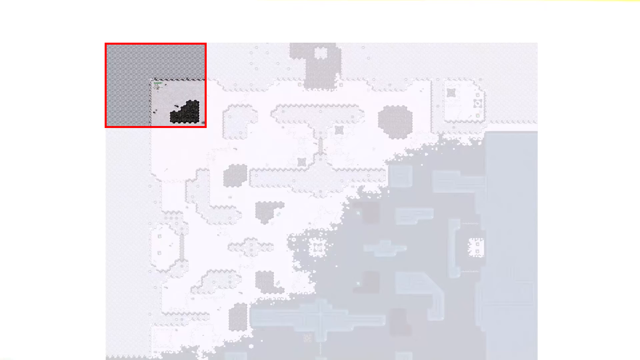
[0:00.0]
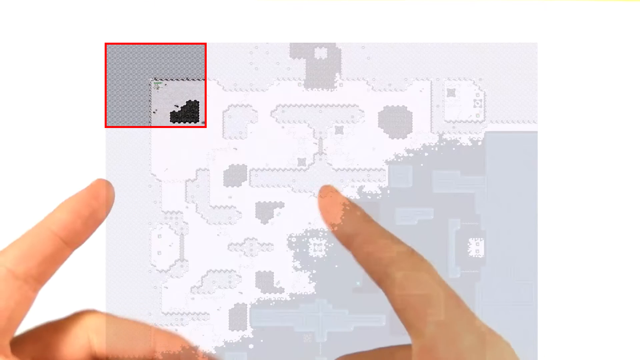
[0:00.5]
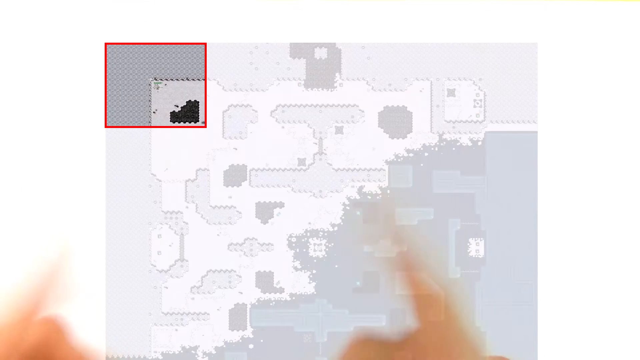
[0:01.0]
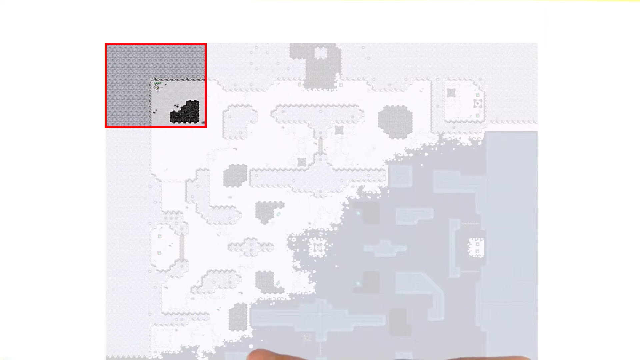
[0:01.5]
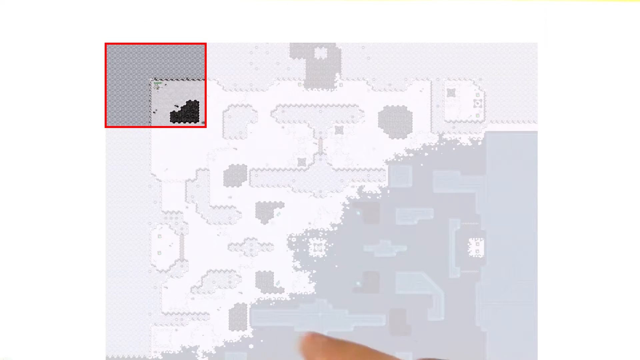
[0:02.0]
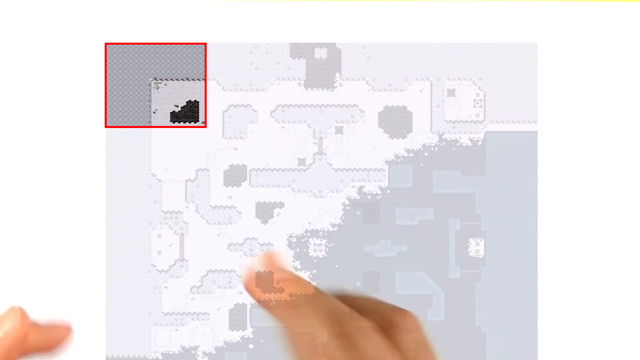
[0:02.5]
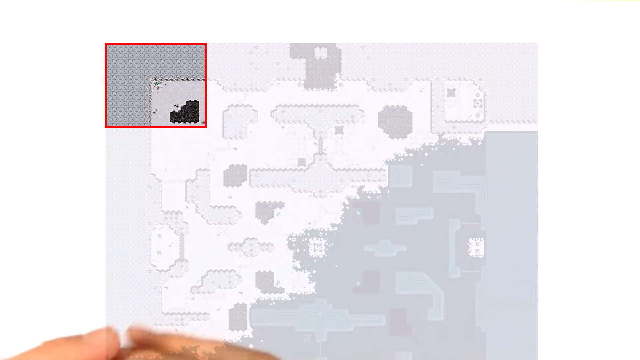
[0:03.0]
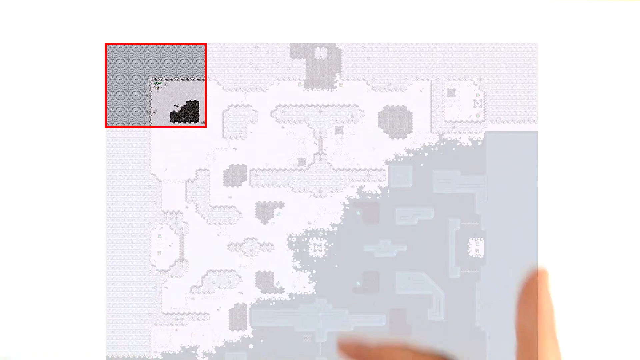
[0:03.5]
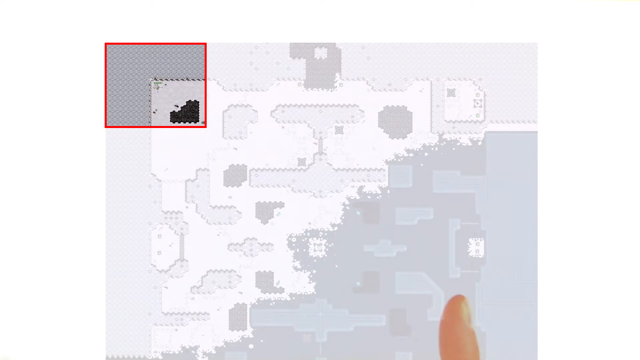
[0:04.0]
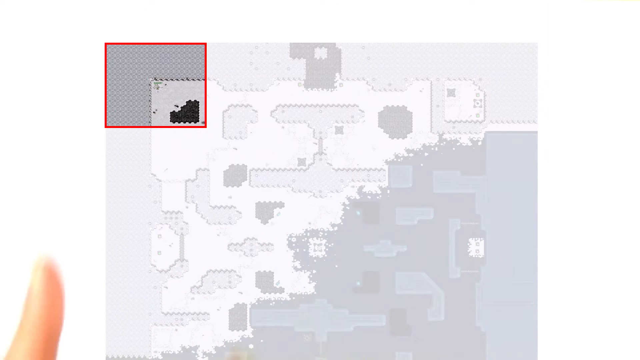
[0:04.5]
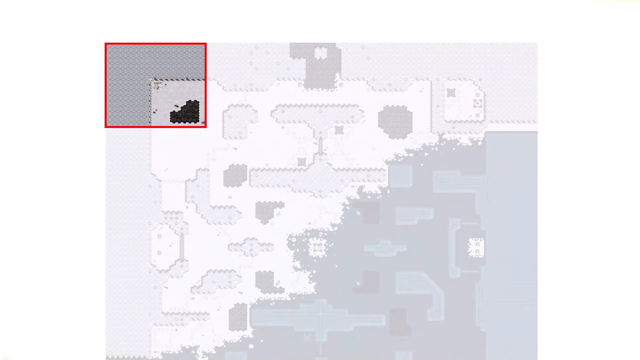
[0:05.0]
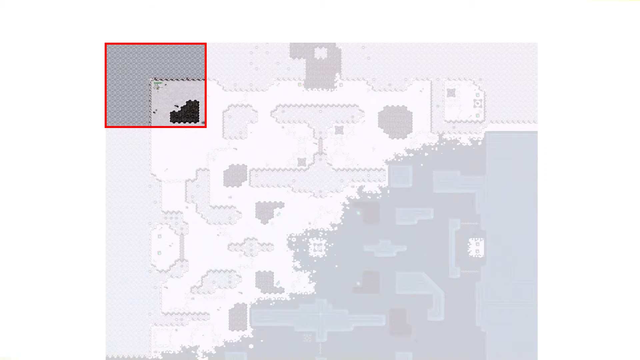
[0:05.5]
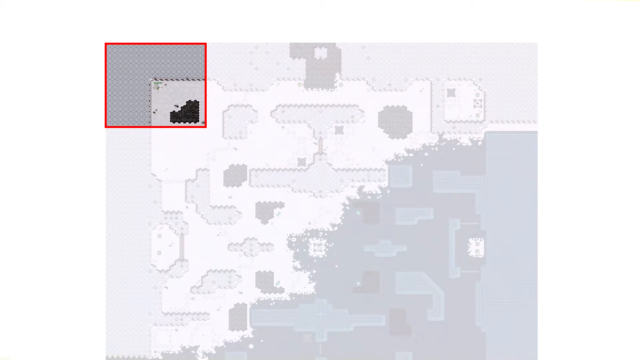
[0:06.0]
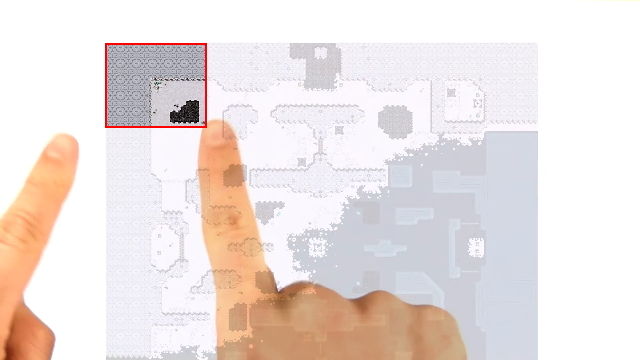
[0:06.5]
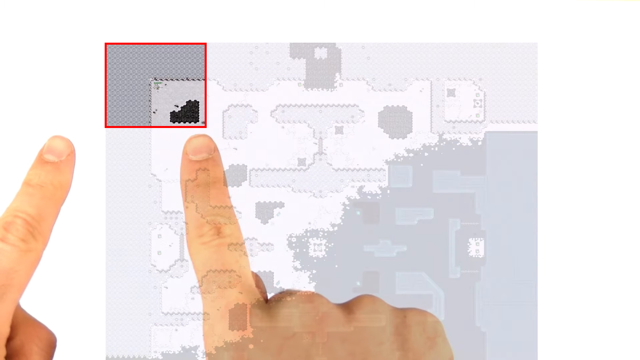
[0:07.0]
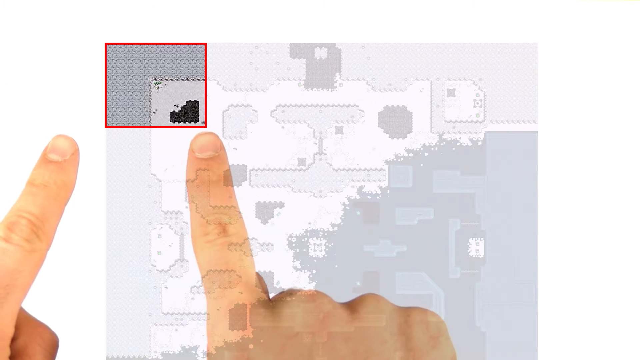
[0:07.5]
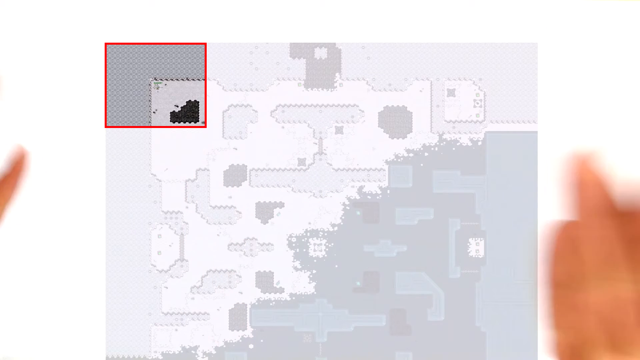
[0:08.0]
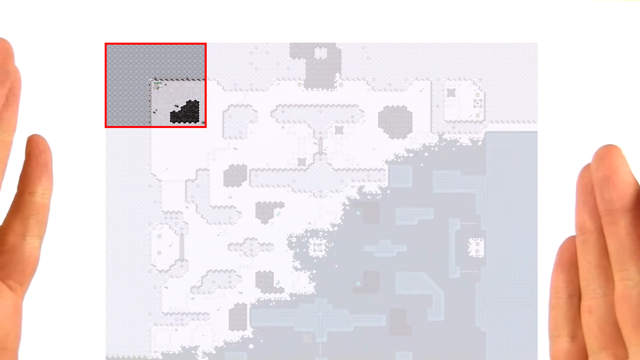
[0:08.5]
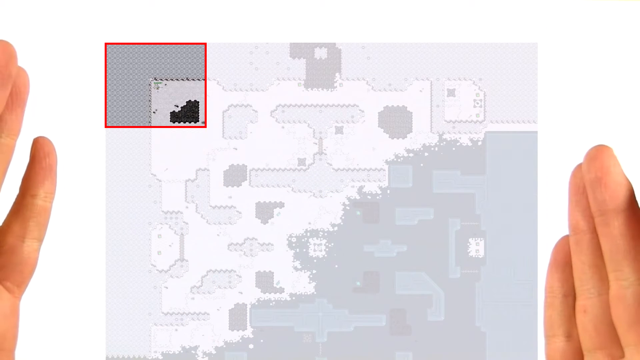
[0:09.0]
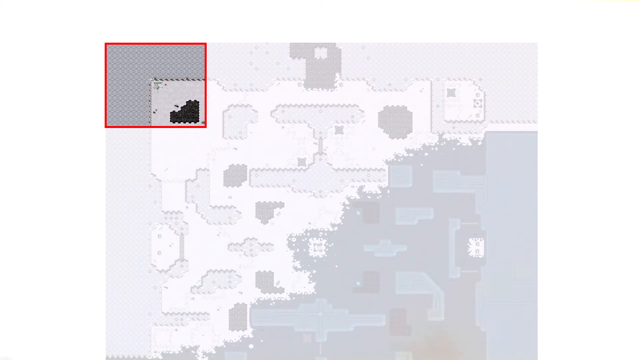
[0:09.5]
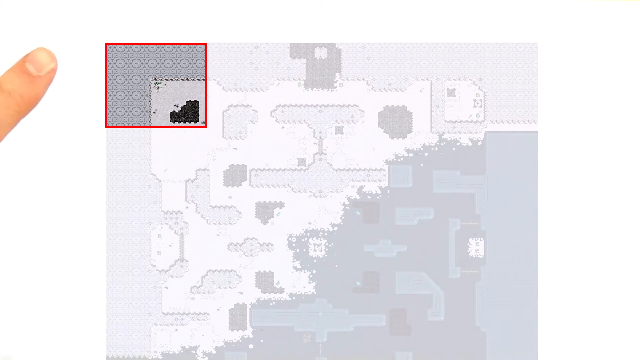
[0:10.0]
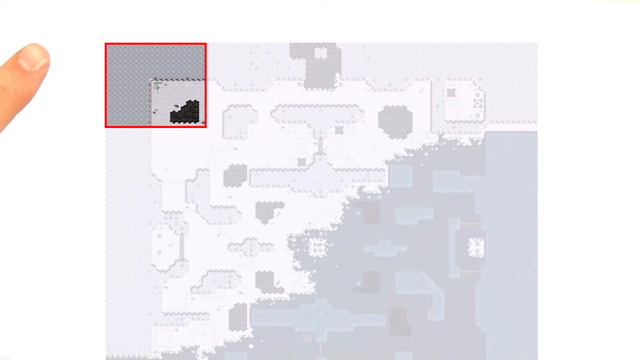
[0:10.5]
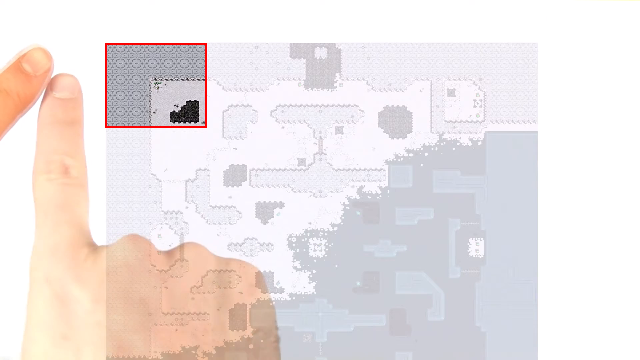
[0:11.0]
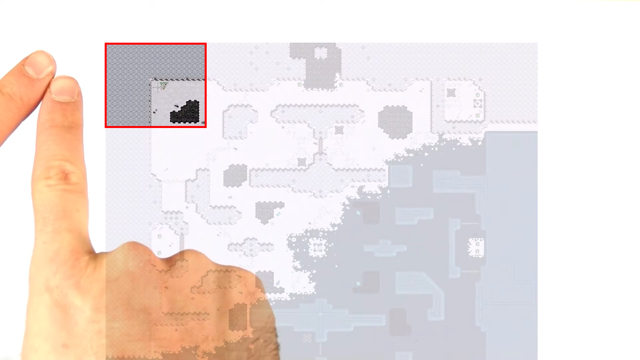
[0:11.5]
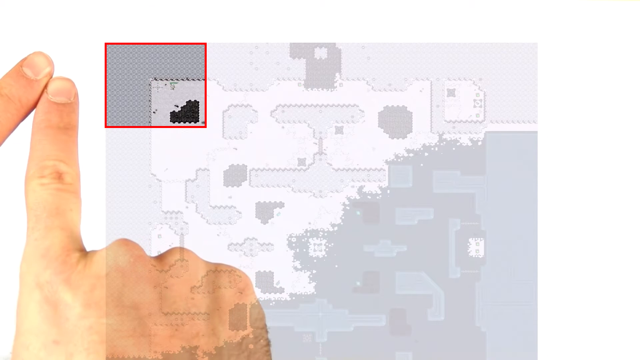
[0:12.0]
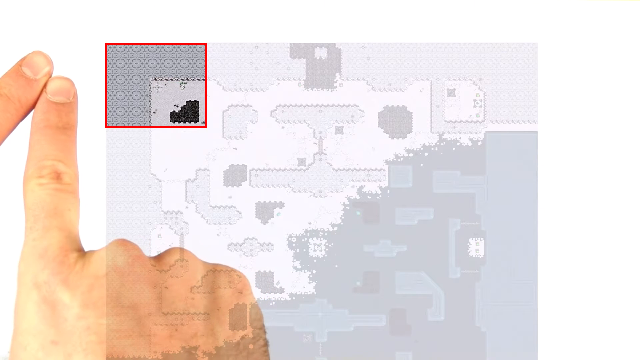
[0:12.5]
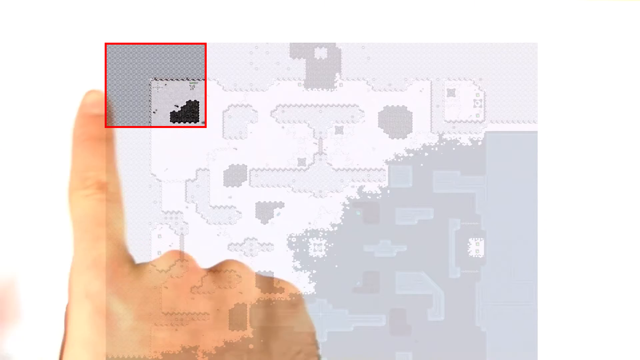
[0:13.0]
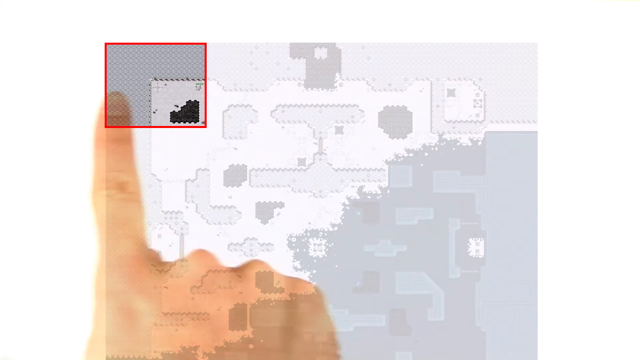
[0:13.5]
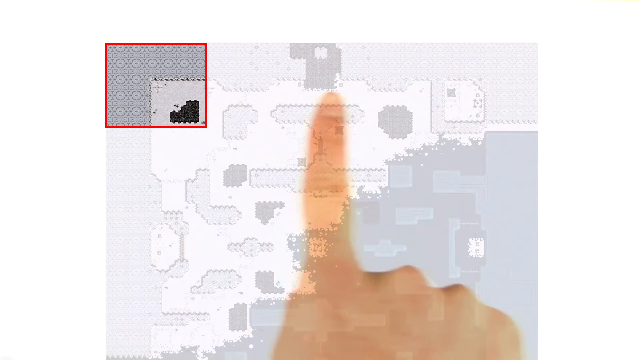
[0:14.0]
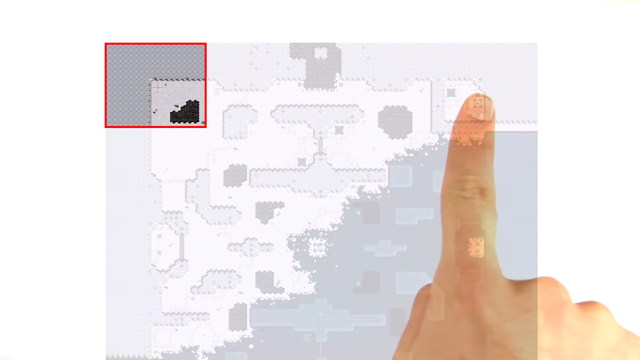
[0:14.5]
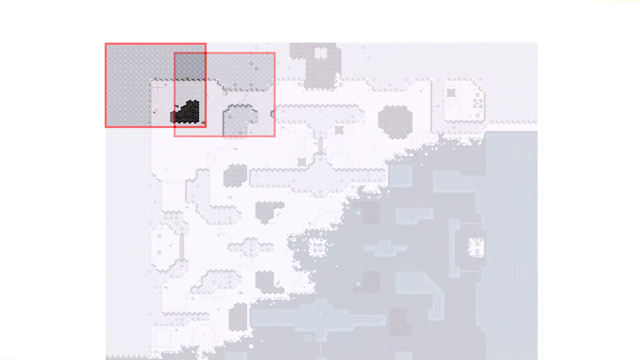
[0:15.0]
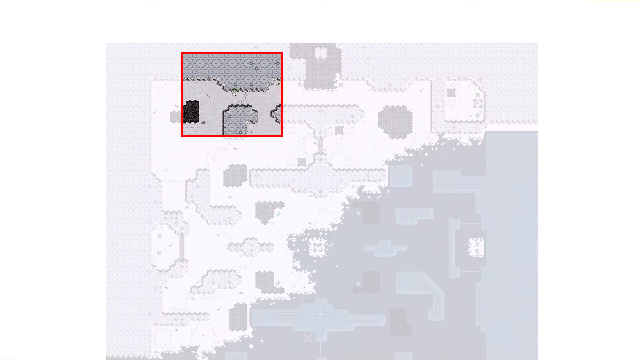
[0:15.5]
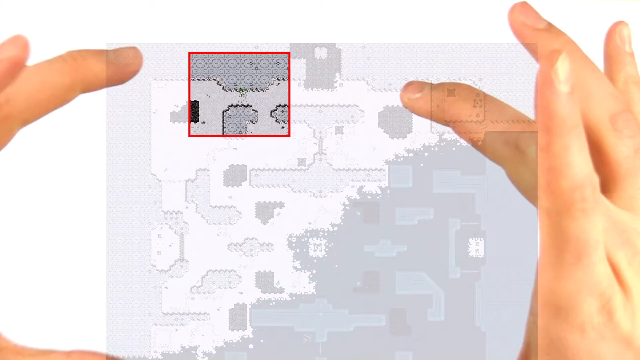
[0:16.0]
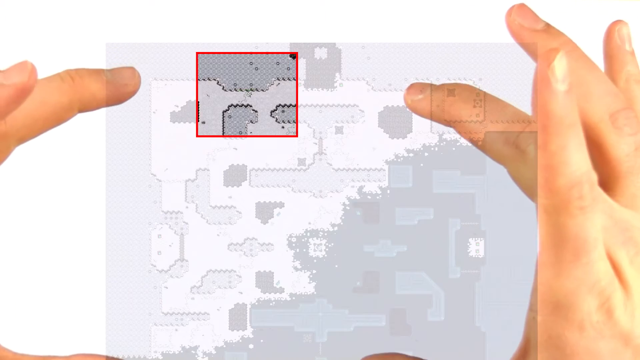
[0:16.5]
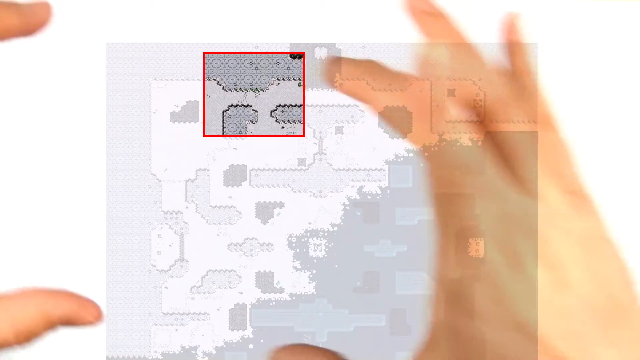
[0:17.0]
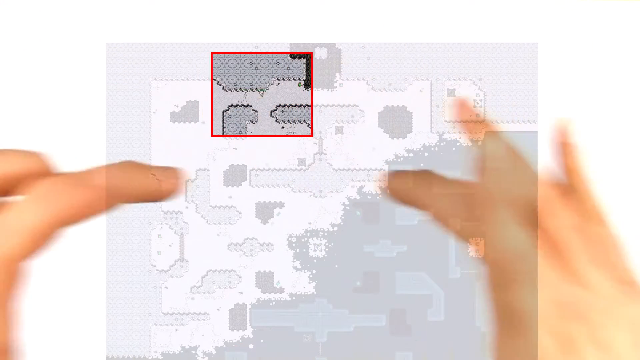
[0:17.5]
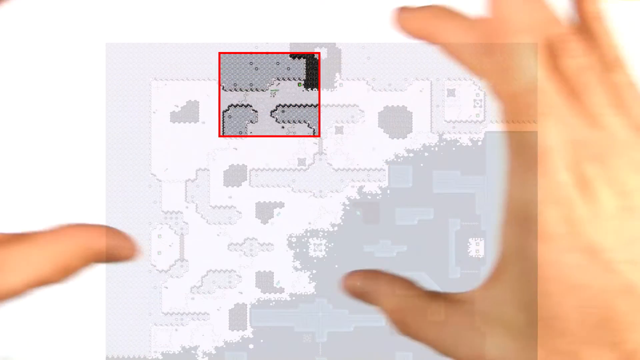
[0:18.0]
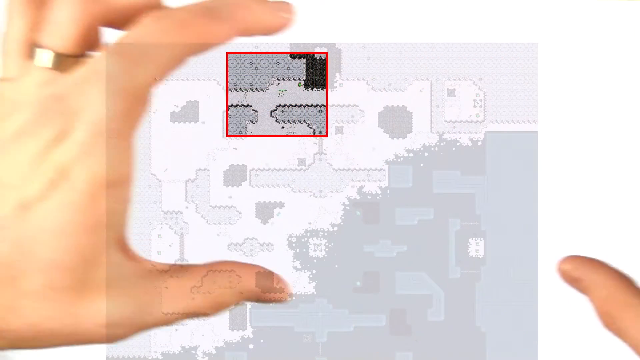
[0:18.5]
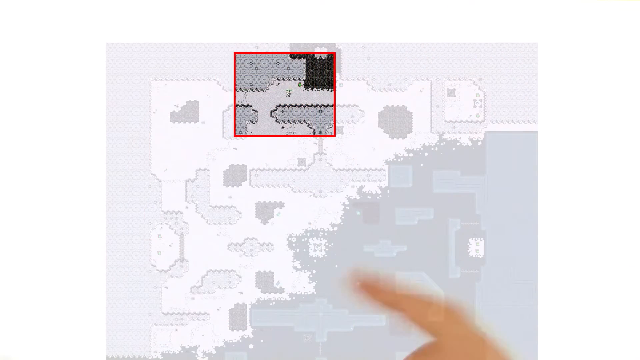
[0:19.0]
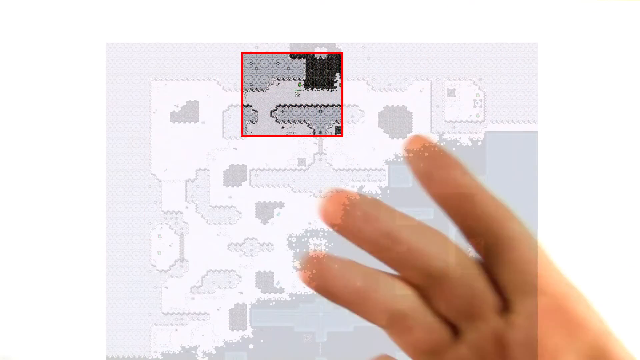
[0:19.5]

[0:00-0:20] A large white background appears, and within it is a square that seems to contain a map of a video game. A person behind the screen shows the map and points out certain things using the index fingers of both hands. A smaller square box highlighted in red points to the upper left side of the map, and the map seems to be more or less transparent. The man uses his fingers to indicate where the map is and points at two corners of it. As he puts both index fingers together, a character moves from left to right inside the red square and then out of it, and the red-highlighted square follows the character as it moves from left to right.